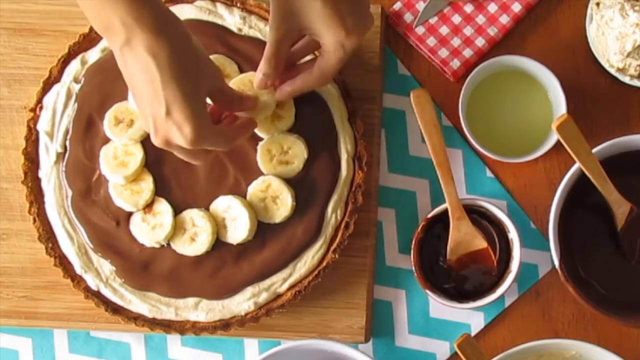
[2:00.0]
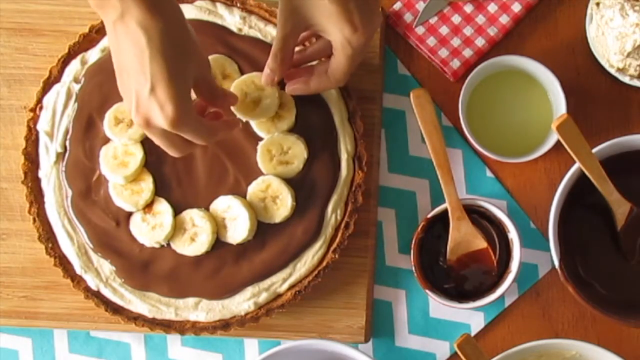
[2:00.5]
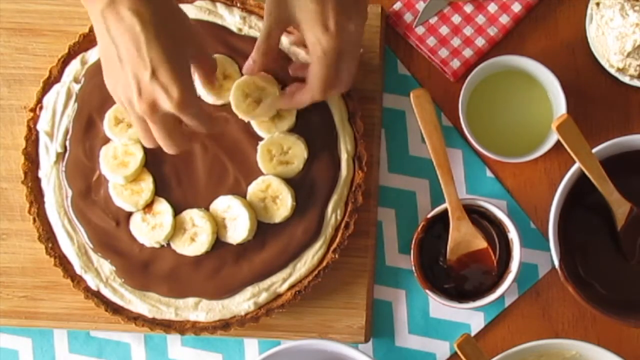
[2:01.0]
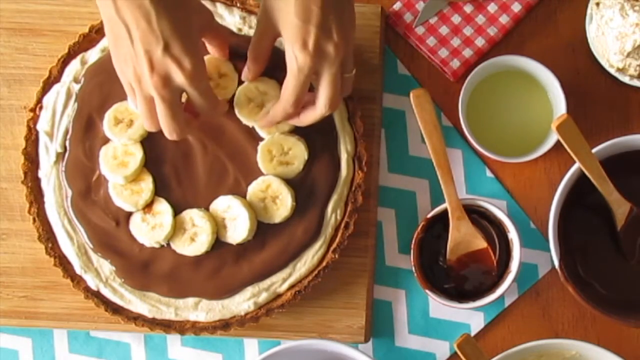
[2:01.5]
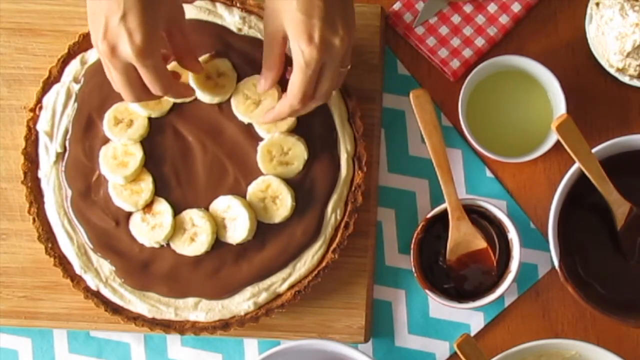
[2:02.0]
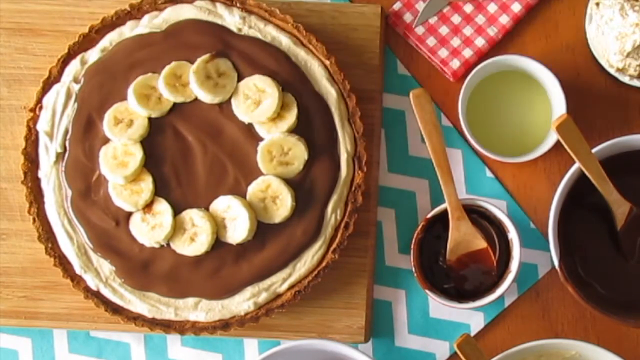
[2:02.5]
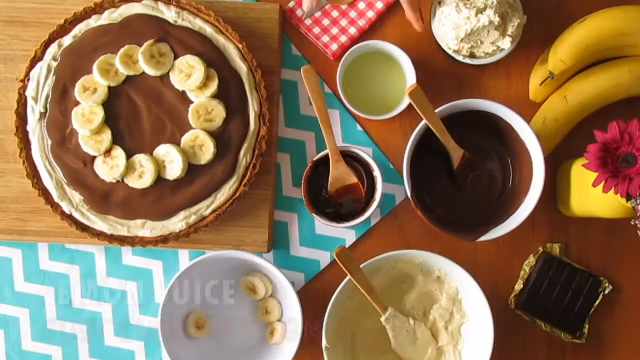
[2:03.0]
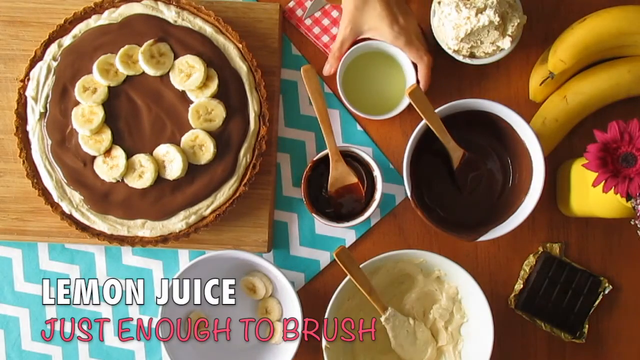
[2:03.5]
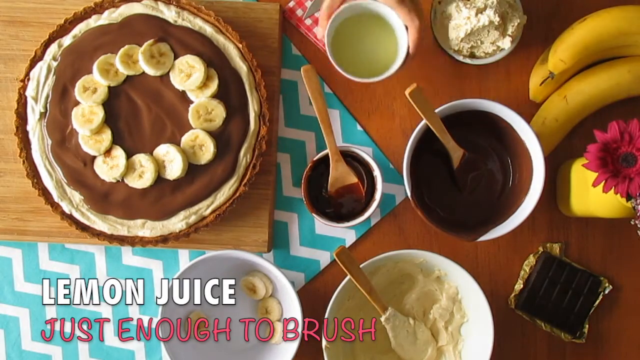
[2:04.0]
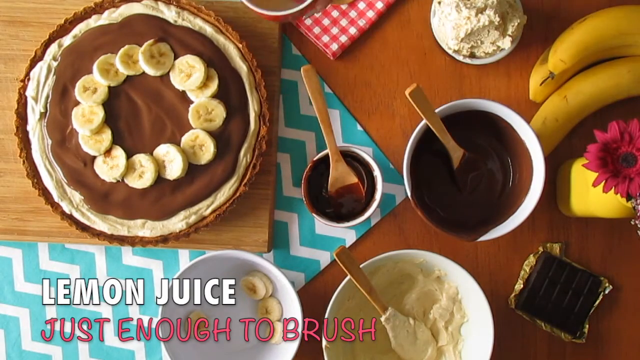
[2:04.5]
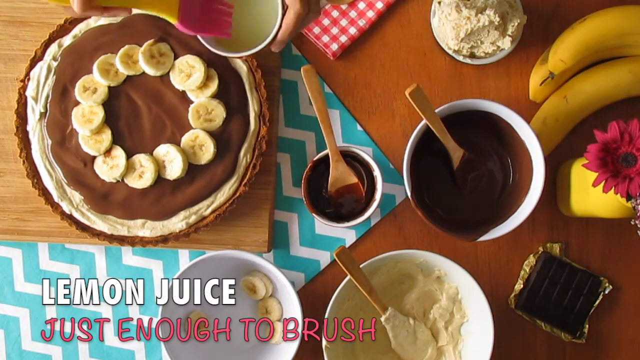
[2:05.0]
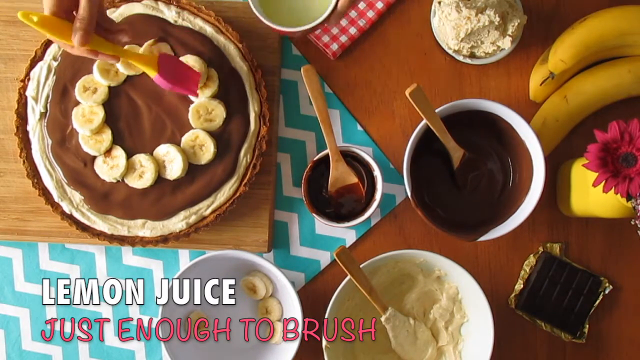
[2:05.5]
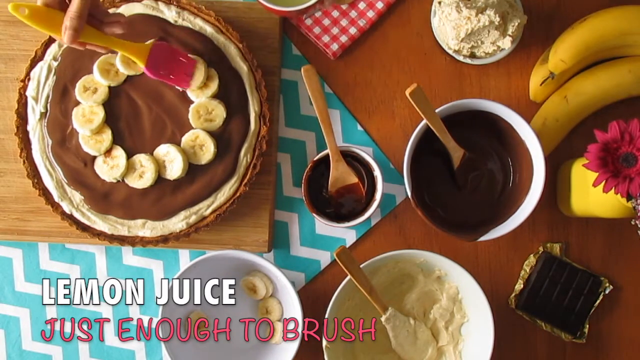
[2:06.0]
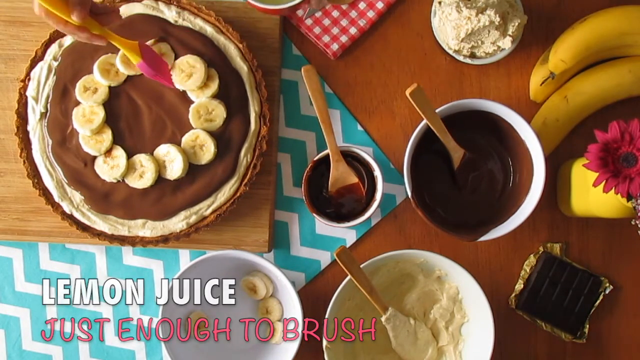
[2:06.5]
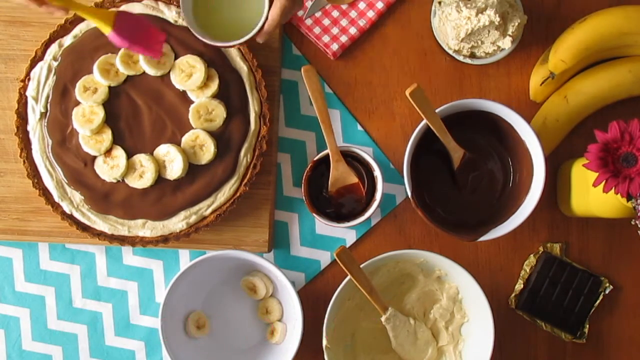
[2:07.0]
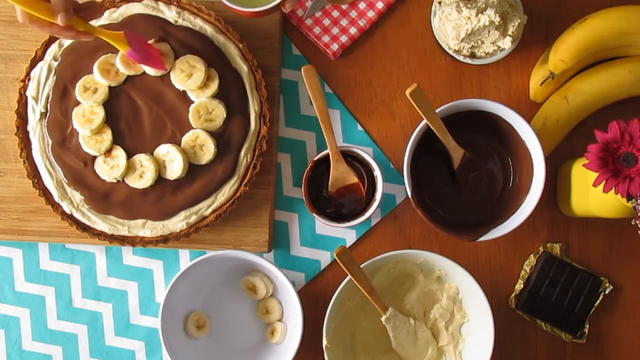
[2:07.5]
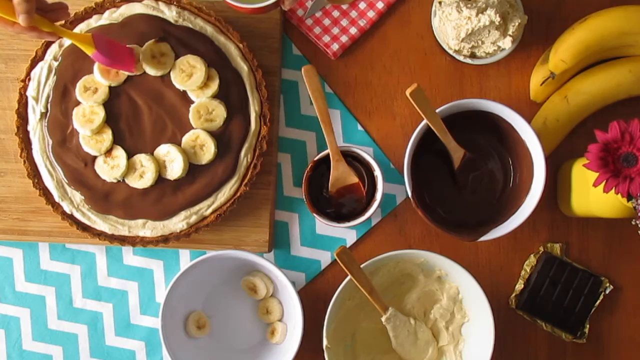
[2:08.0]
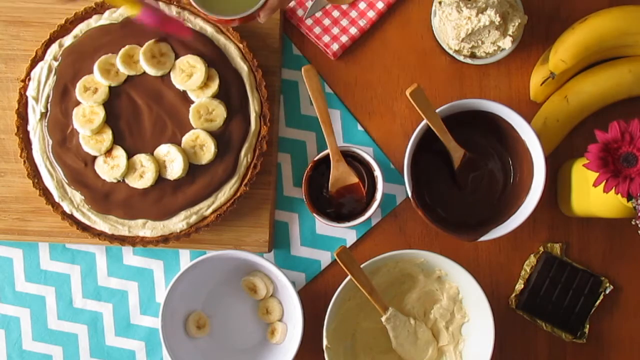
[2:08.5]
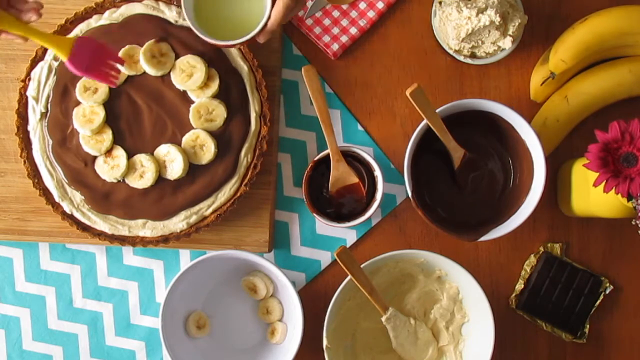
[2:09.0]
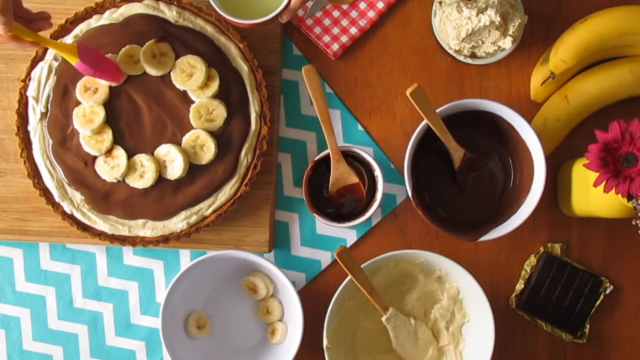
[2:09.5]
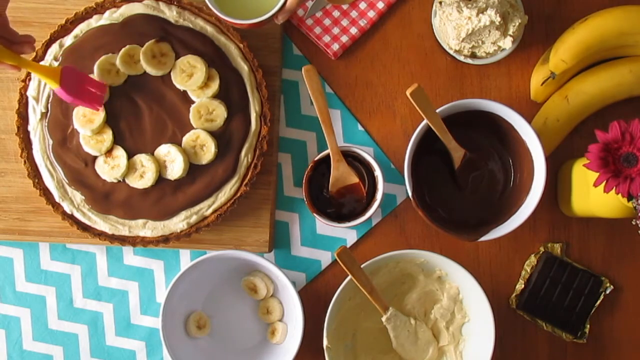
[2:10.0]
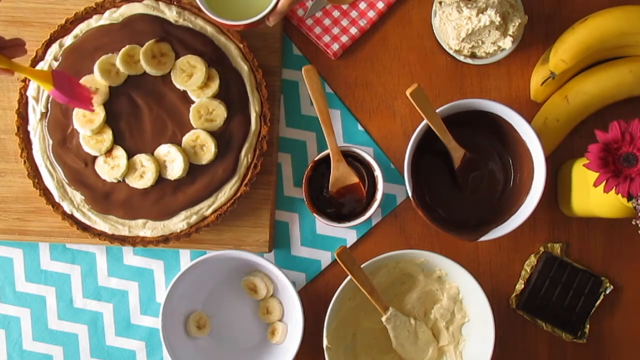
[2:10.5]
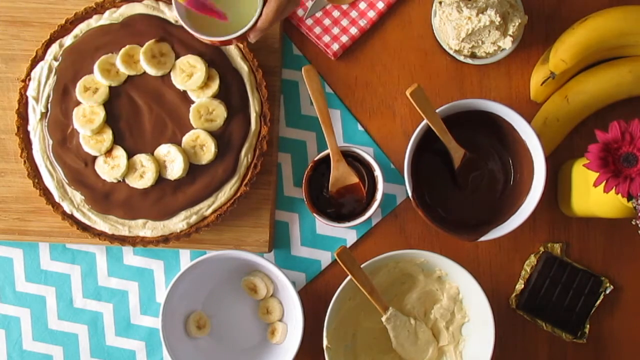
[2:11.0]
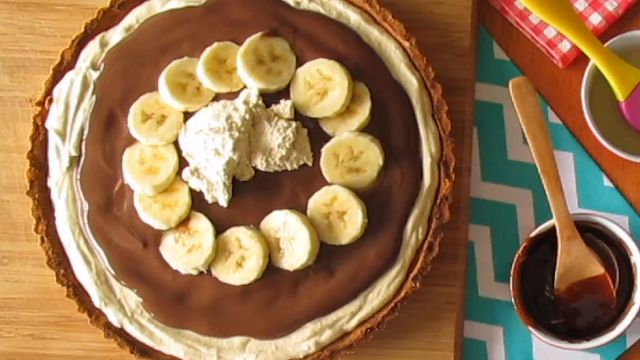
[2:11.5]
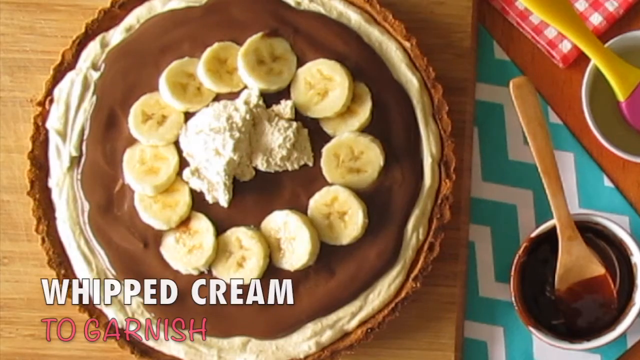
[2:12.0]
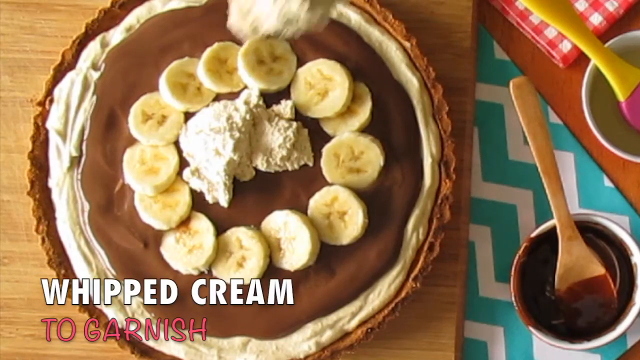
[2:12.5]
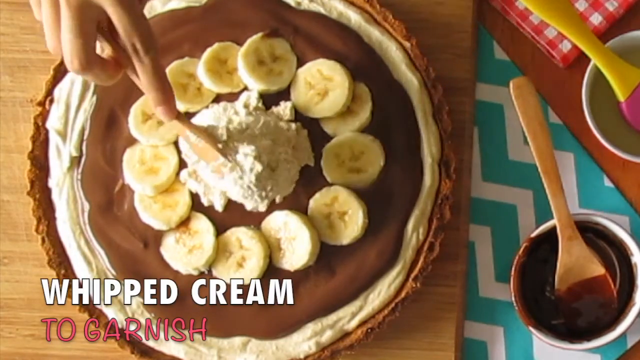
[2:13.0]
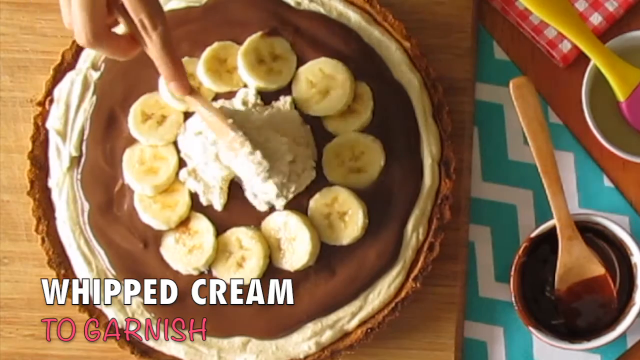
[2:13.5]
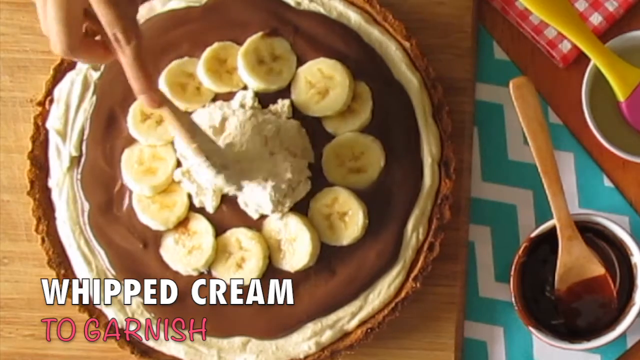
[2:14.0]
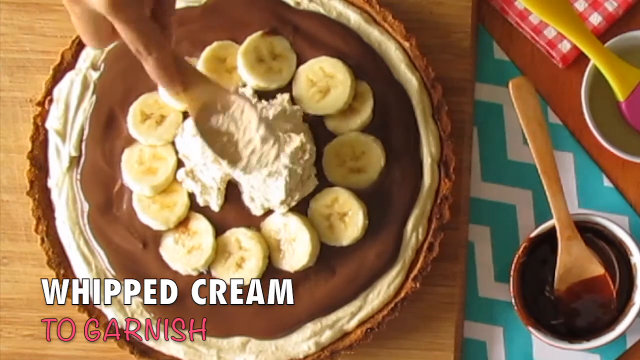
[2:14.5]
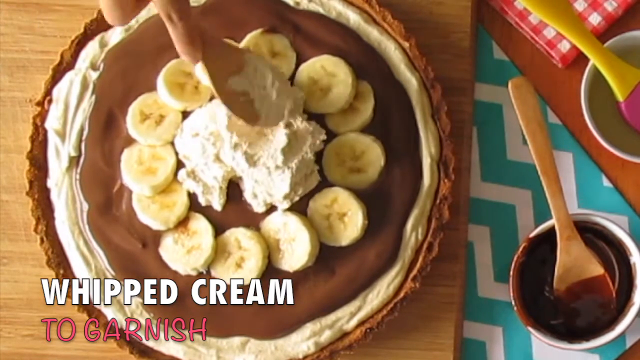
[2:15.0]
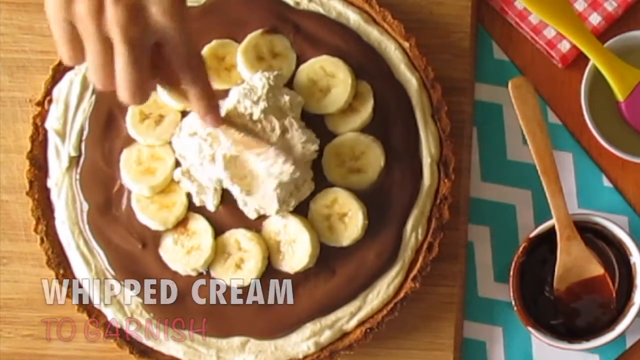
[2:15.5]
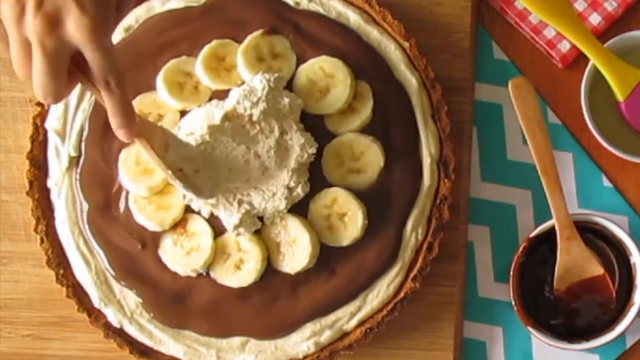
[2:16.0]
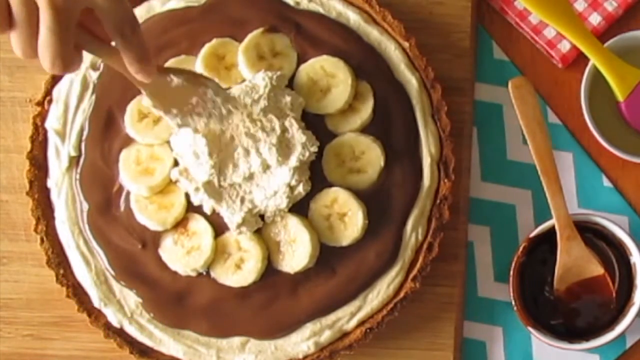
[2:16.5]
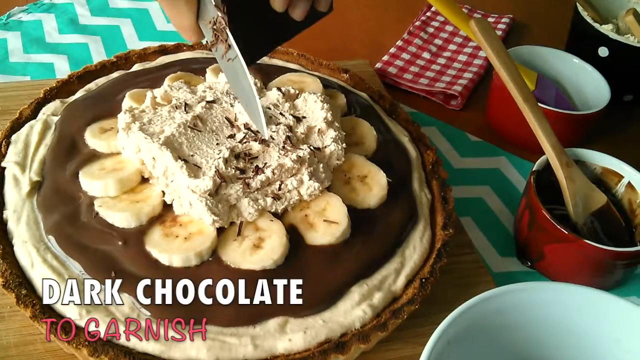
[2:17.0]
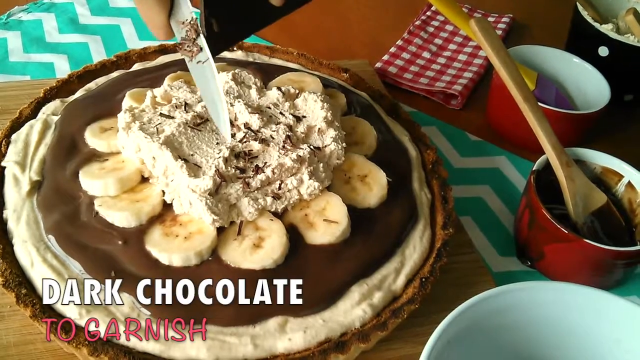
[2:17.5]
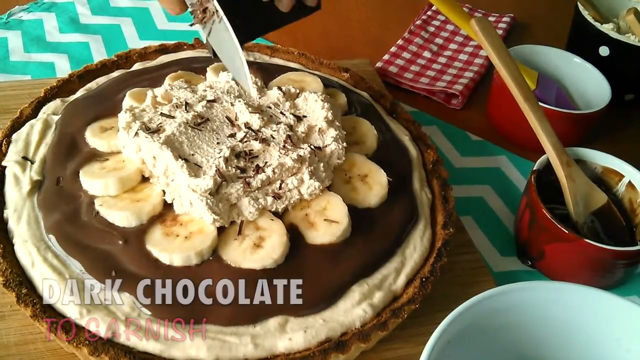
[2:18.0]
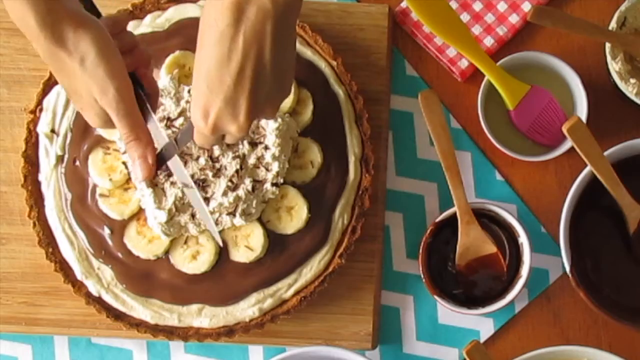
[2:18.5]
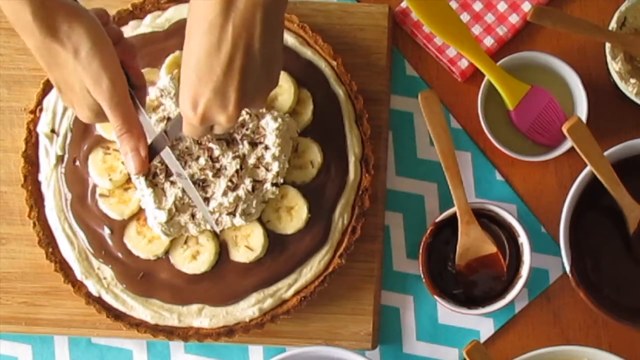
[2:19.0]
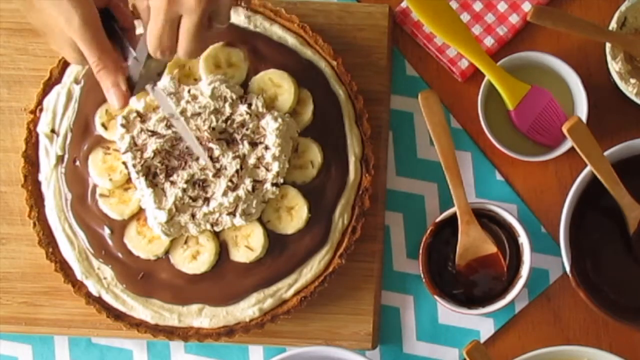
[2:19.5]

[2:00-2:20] From a top view of the pie, hands place slices of banana in a circle on top of the chocolate ganache. White on-screen text reads "lemon juice", and the hands use a pink and yellow brush to apply lemon juice to the banana slices on top of the pie. The video cuts to the hands placing more whipped cream in the middle of the banana circle and smoothing it with the back of the wooden spoon. Next, holding a knife, they cut pieces of dark chocolate into sprinkles on top of the cream in the middle of the circle of bananas, looking almost as if they are shaving it, as decoration for the pie.